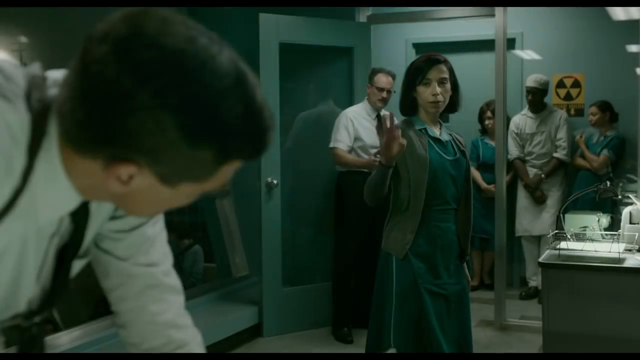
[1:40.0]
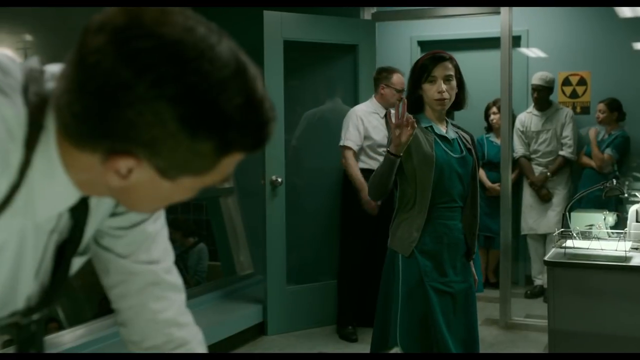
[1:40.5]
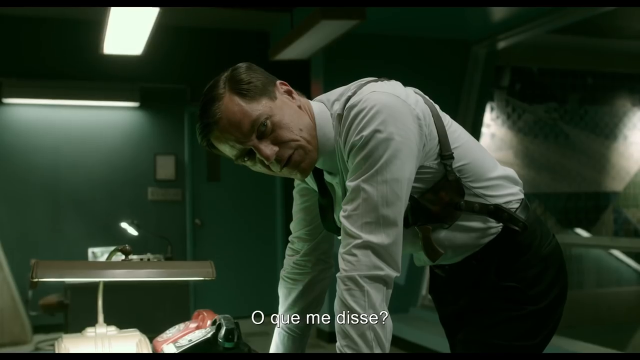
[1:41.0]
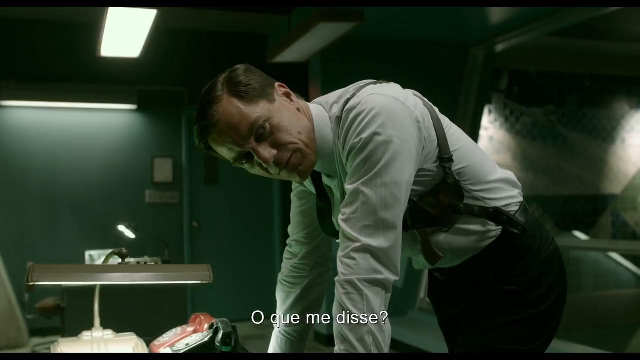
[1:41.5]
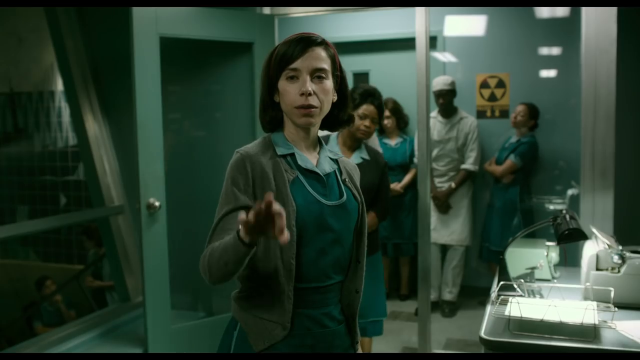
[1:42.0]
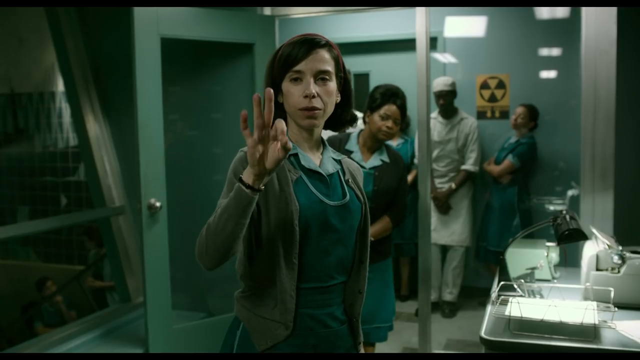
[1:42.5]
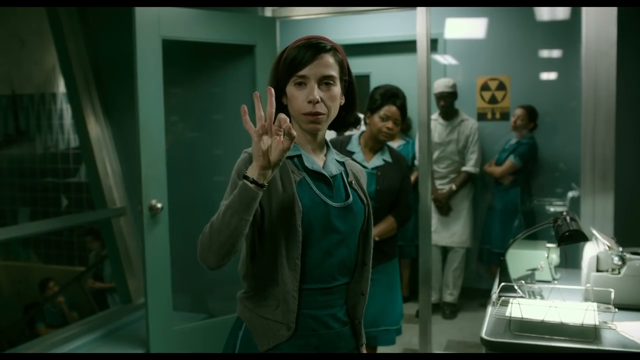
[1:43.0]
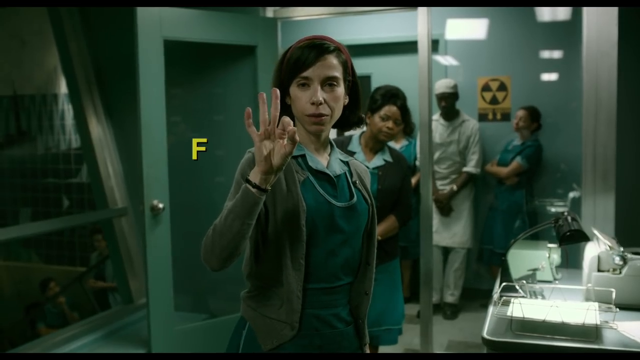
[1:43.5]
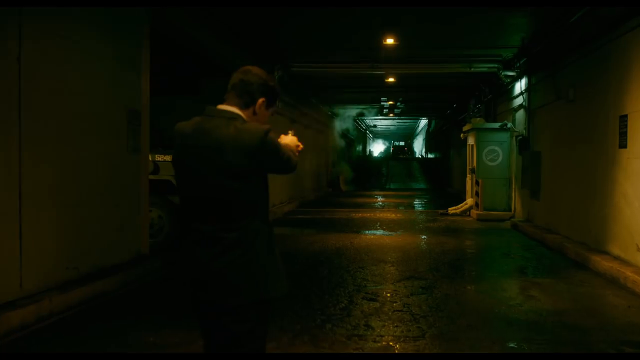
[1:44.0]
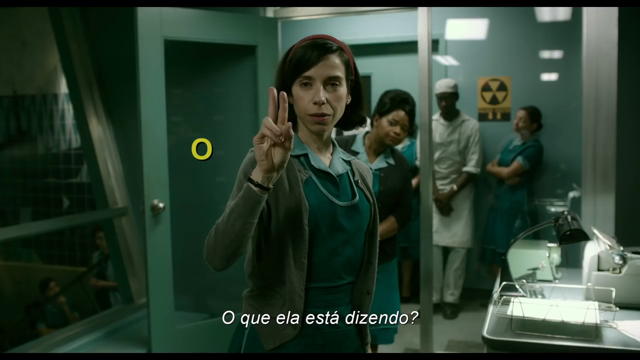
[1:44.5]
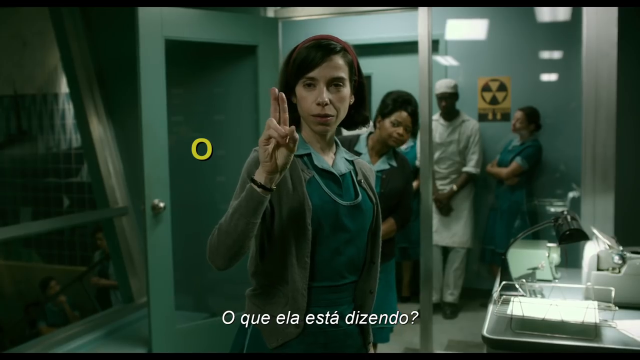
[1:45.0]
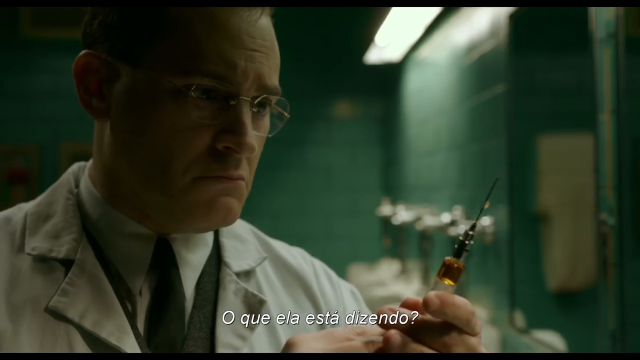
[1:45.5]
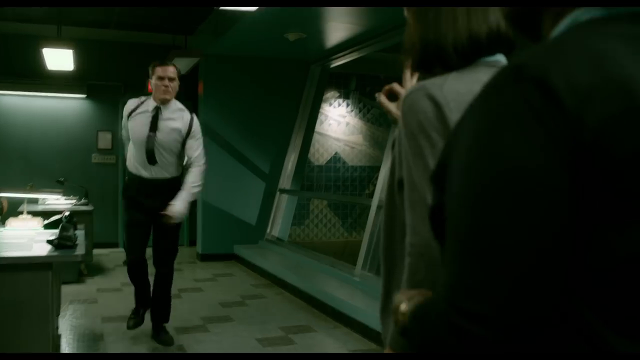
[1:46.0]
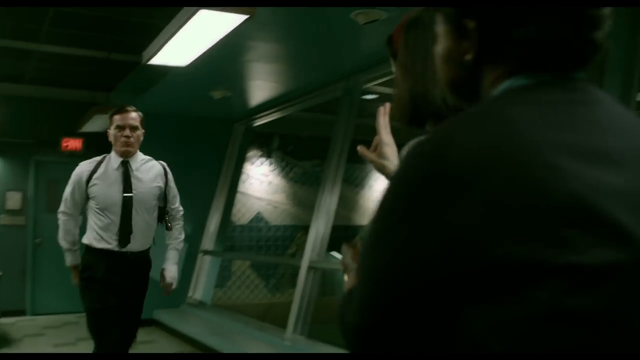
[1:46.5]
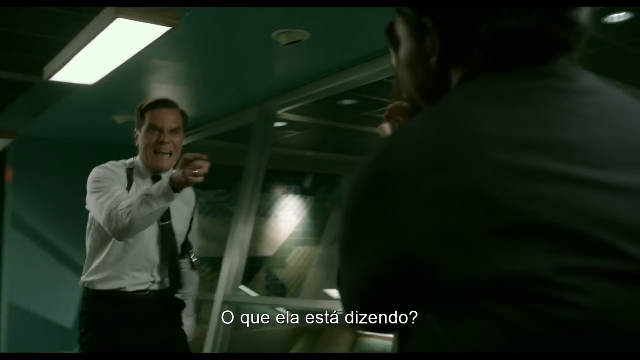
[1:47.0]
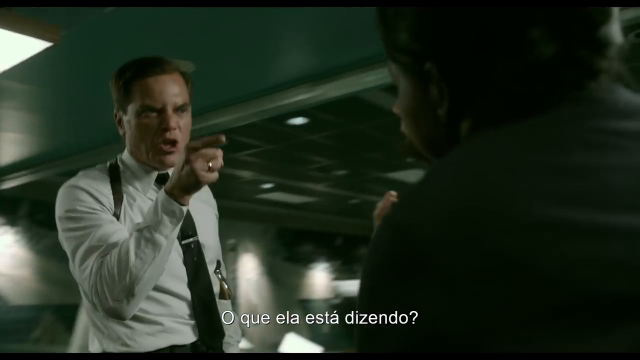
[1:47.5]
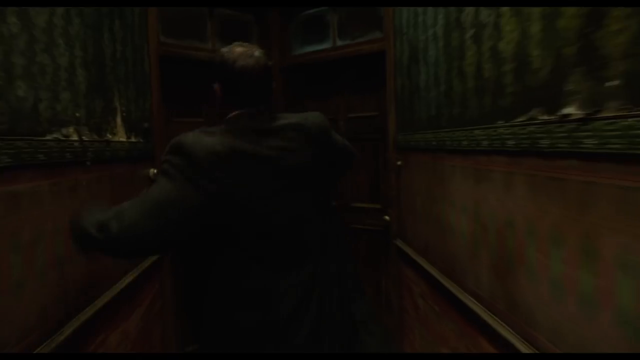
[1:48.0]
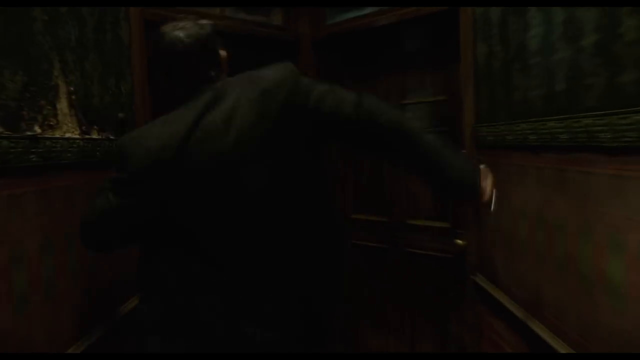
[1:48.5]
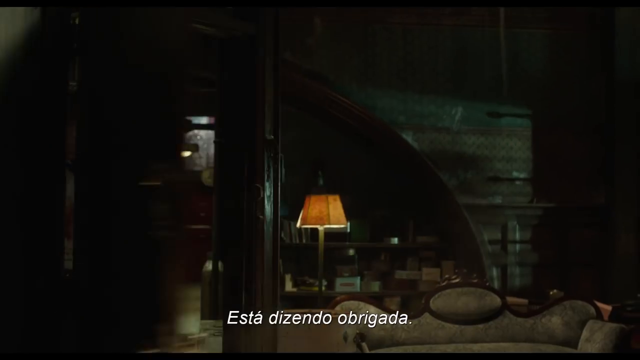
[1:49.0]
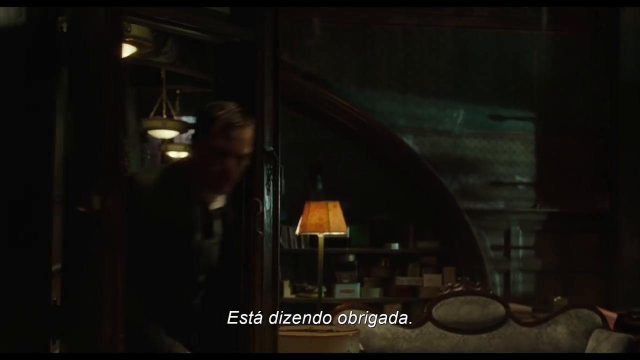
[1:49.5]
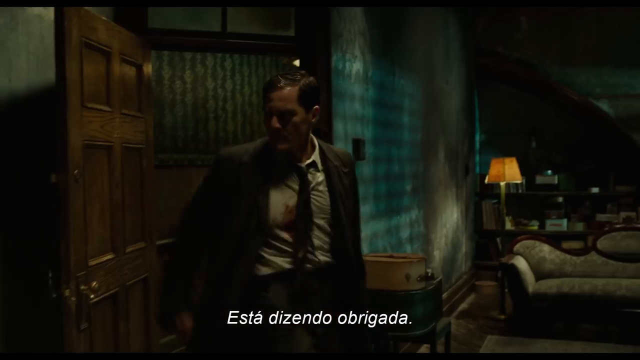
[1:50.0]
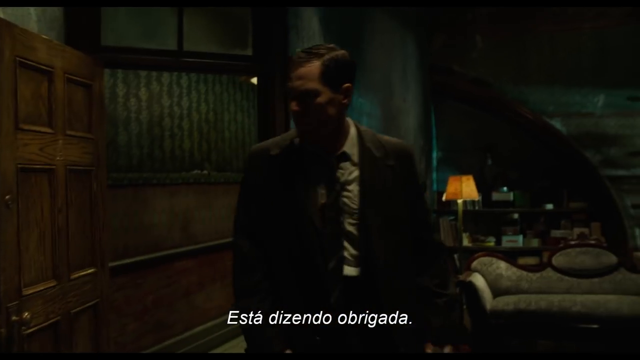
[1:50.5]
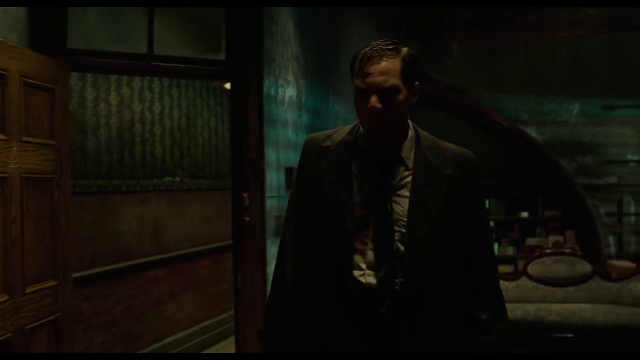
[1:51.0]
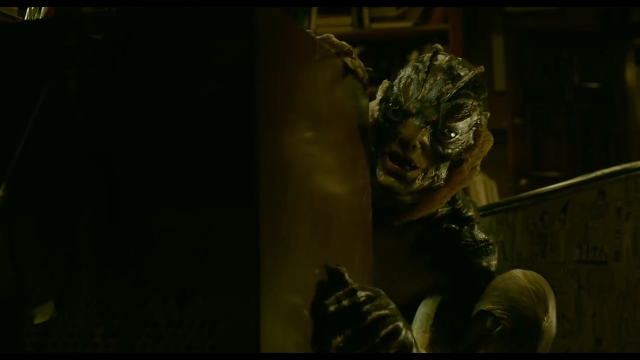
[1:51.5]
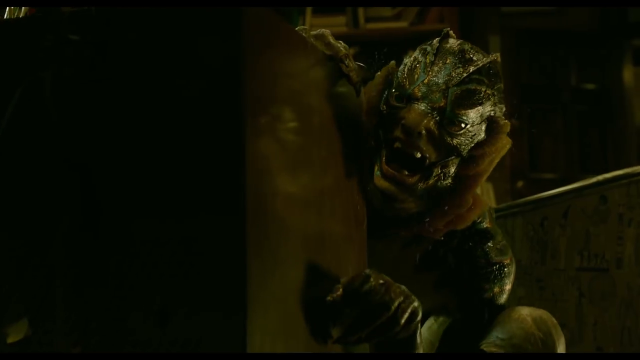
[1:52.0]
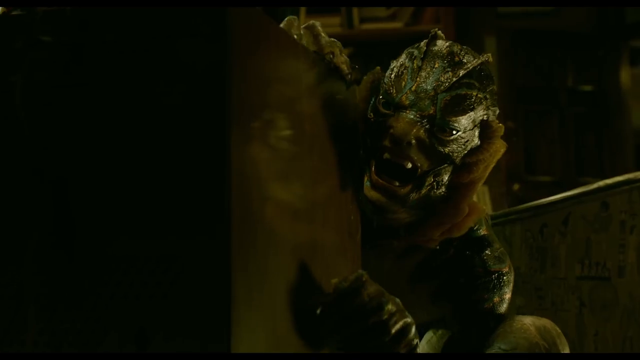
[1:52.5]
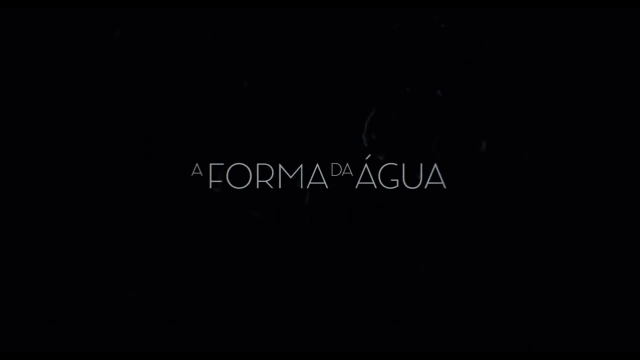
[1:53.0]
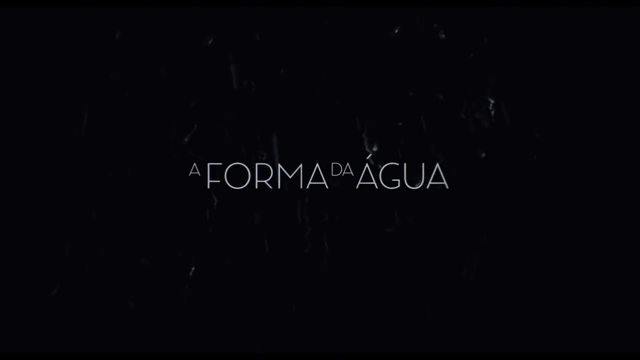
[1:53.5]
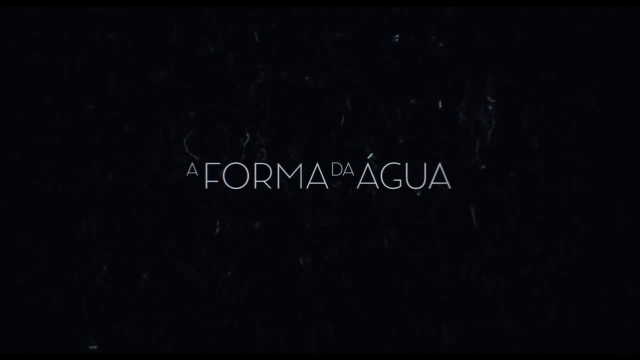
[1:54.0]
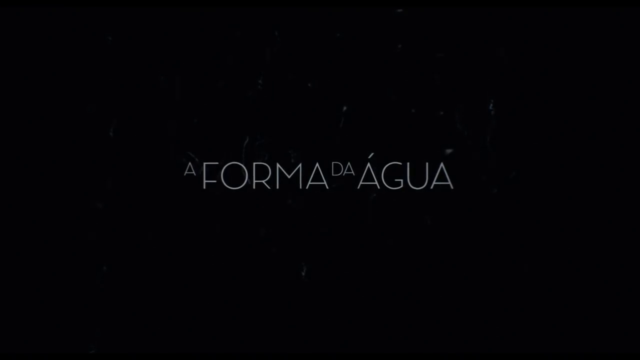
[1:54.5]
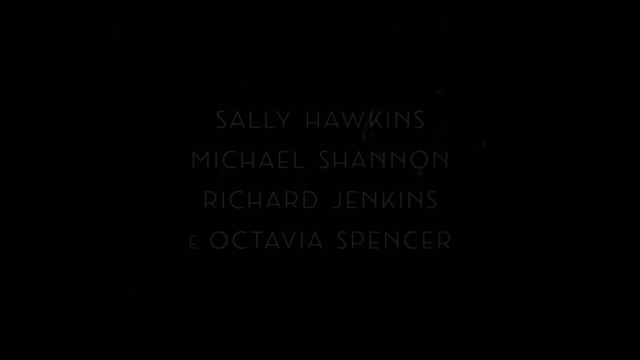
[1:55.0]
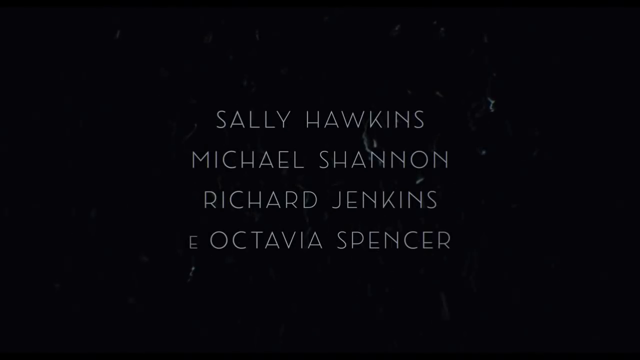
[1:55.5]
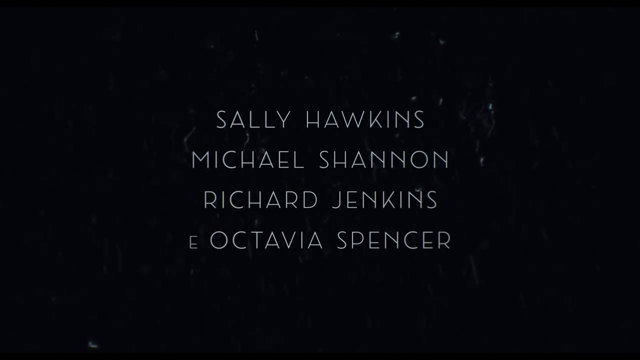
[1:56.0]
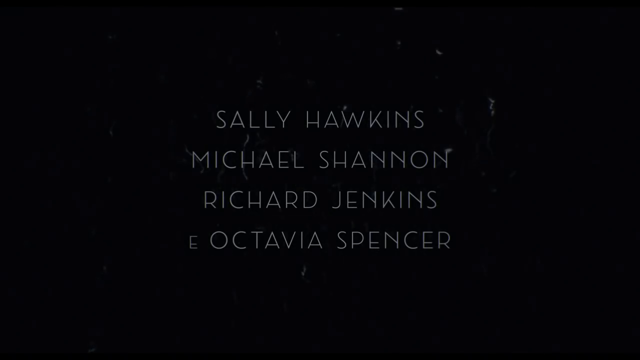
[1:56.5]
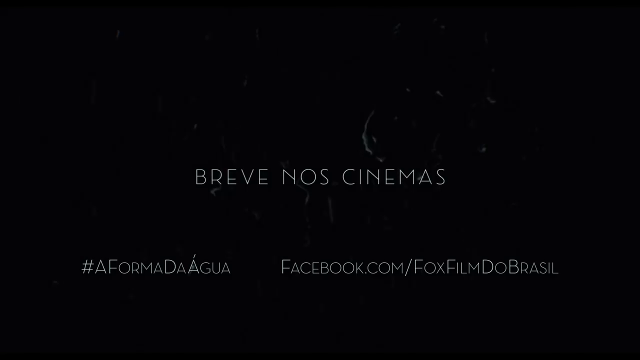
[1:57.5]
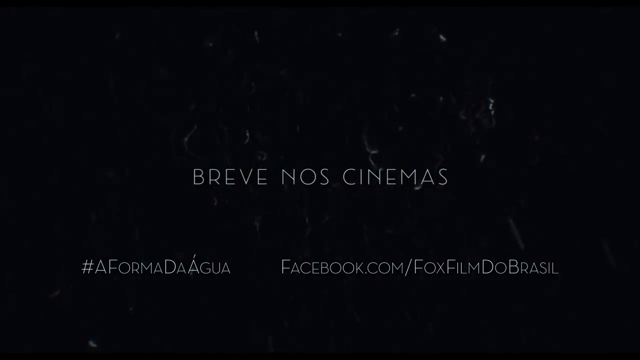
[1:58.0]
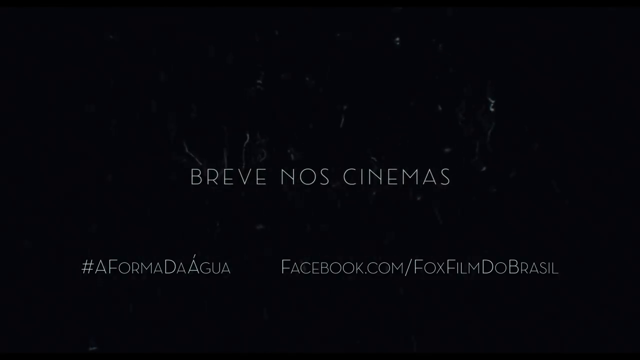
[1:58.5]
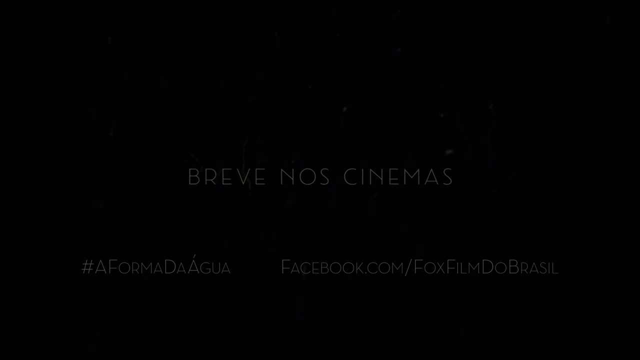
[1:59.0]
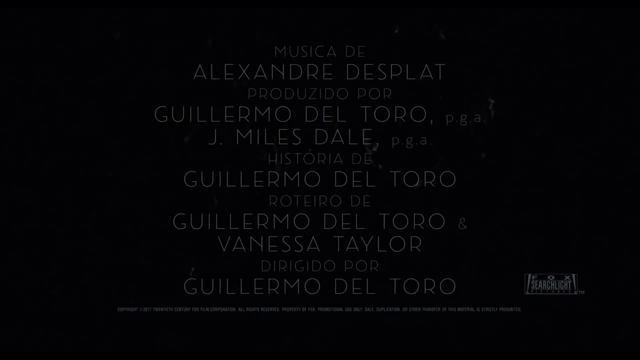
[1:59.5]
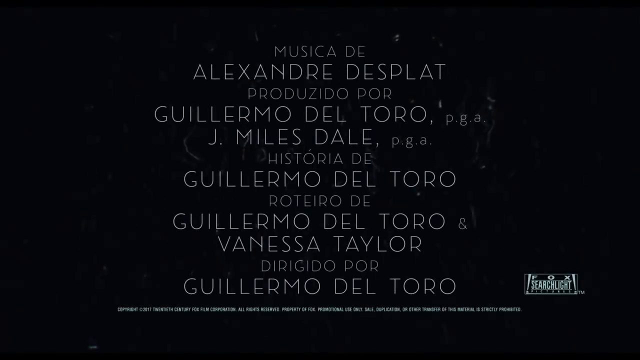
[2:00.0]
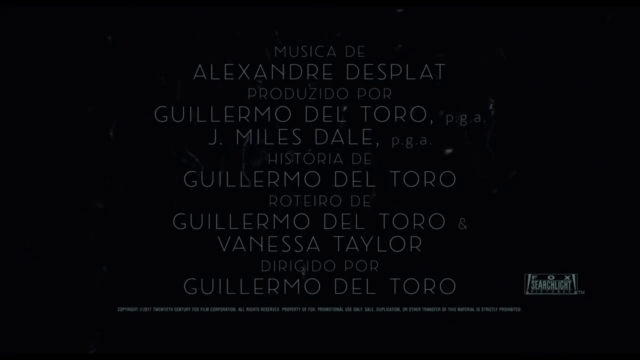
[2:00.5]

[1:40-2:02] An office-type area holds several people. On the left, closest to the camera, a Caucasian man with dark hair, brown or black, is hunched over probably a table that is not visible. He wears a white dress shirt and black tie, plus a strap that is either suspenders or a gun holster, and he faces away from the camera toward a Caucasian woman slightly off center to the right. She wears a sweater over an old-fashioned-looking top, maybe from the 40s or 50s, and a necklace, and she makes hand signals to the man. White text at the bottom of the screen says "O QUE ME DISSE?" The man's face is then shown, and the strap turns out to be a gun holster. The woman is shown again making another hand symbol at him. The video then cuts to a man holding a gun in what looks like a parking lot or an underground area beneath a building, with two MPs in the bottom left corner of the screen and a car in the bottom right corner.